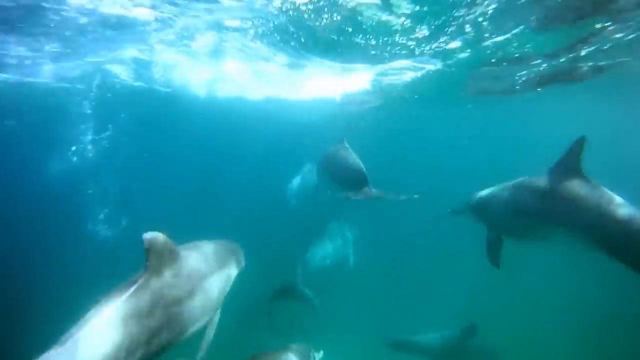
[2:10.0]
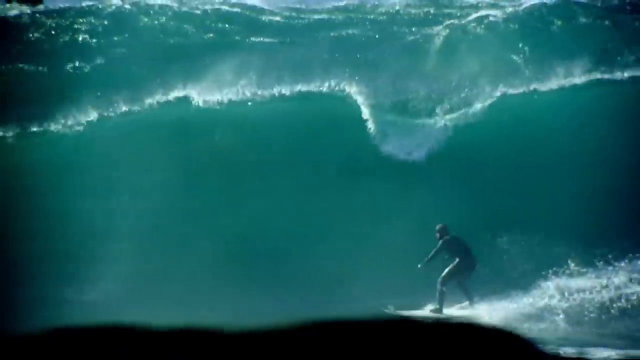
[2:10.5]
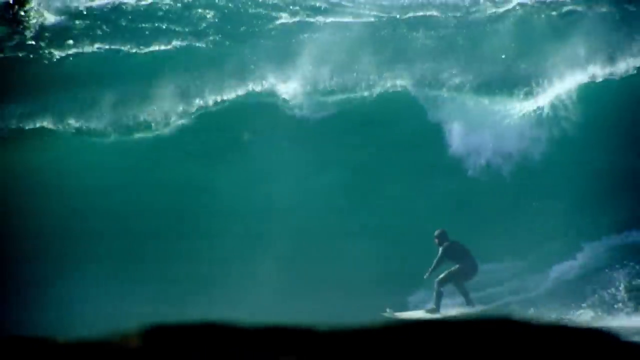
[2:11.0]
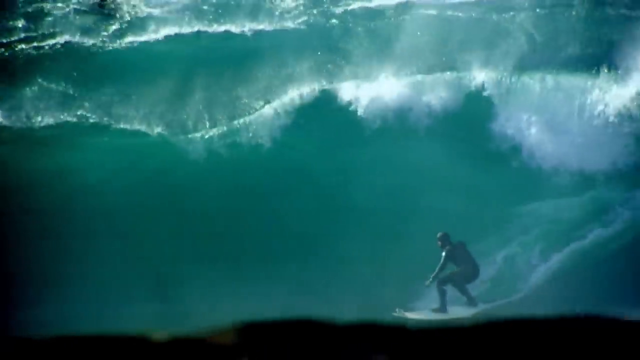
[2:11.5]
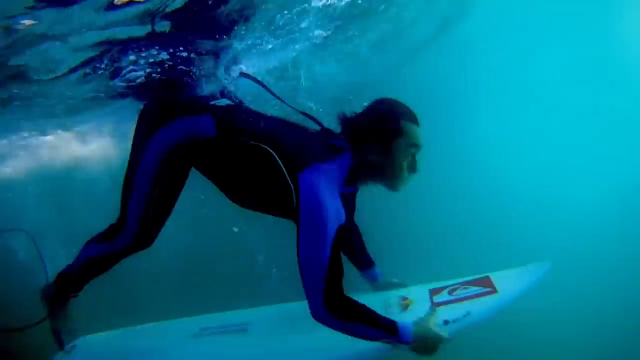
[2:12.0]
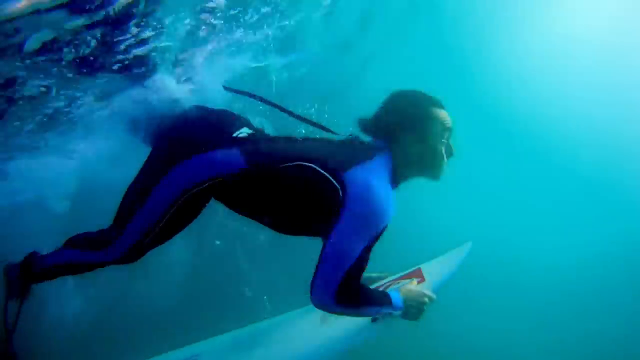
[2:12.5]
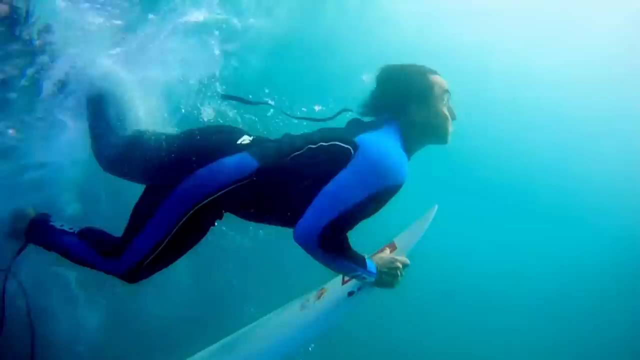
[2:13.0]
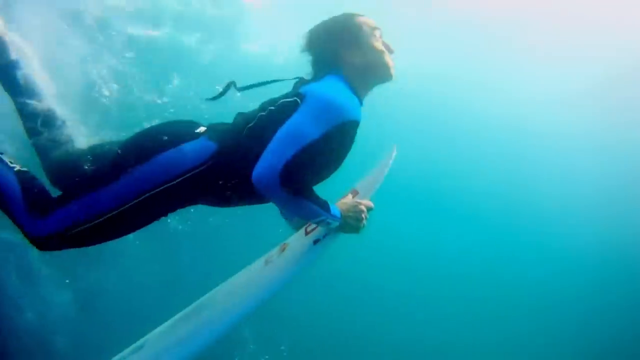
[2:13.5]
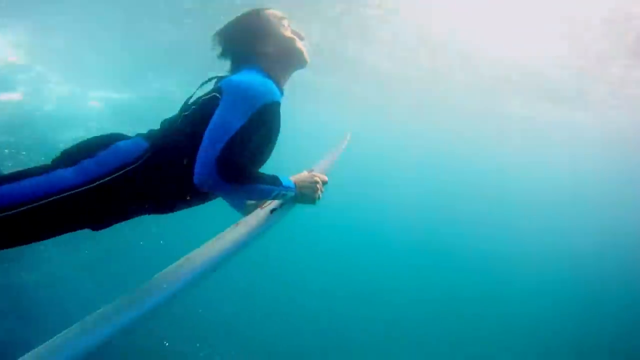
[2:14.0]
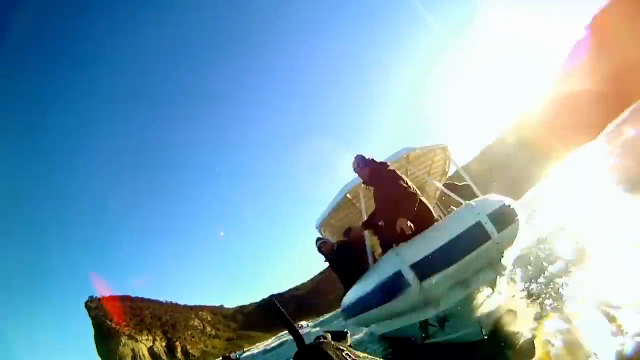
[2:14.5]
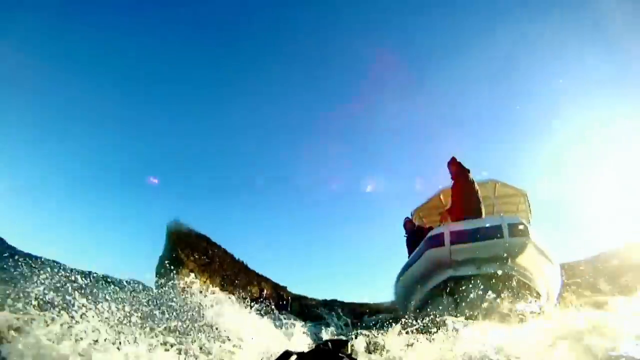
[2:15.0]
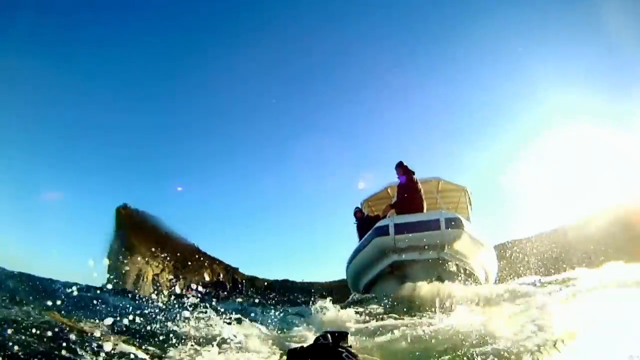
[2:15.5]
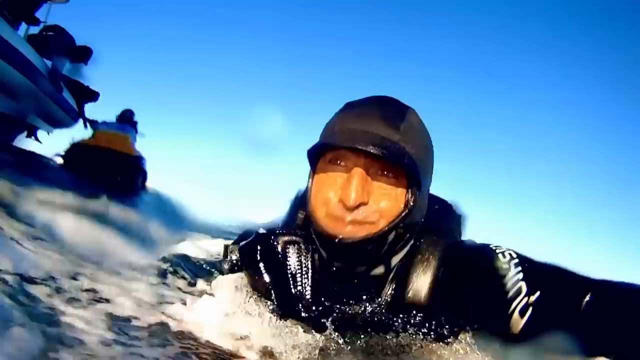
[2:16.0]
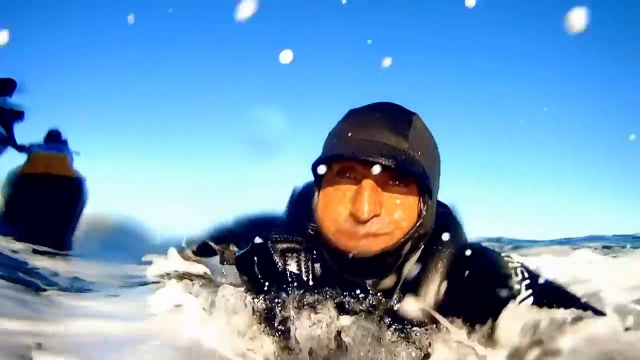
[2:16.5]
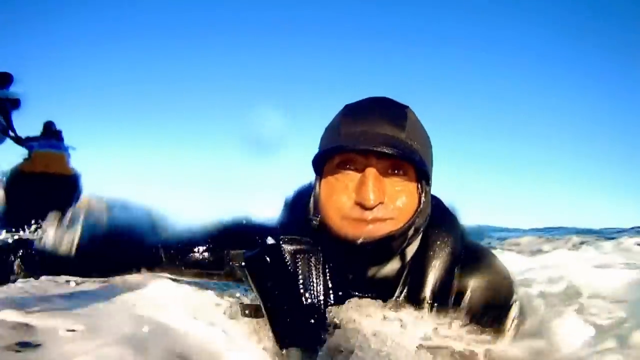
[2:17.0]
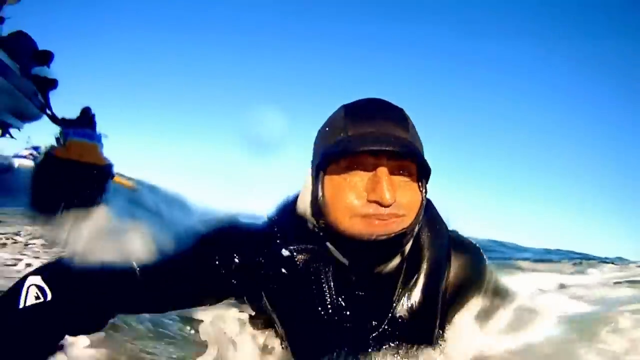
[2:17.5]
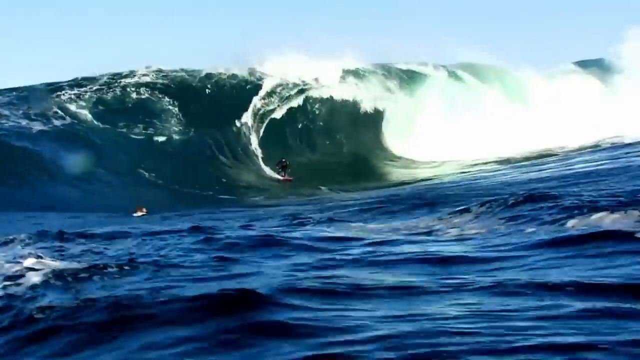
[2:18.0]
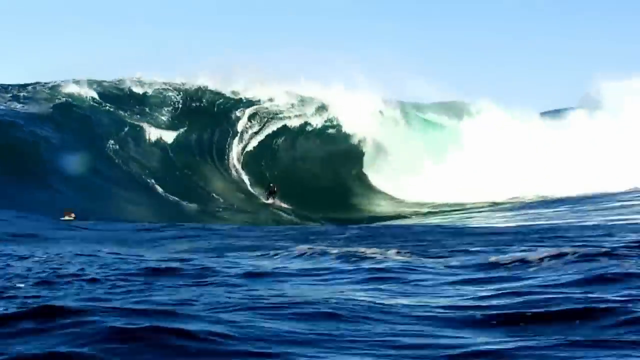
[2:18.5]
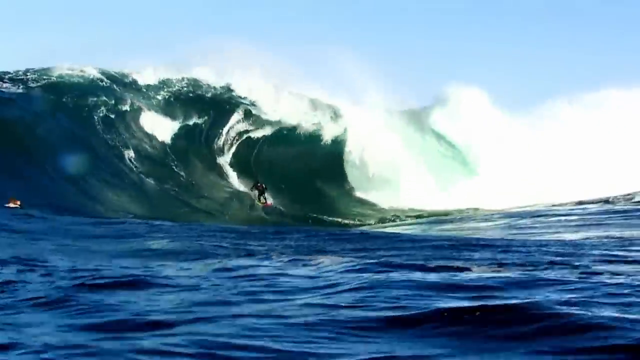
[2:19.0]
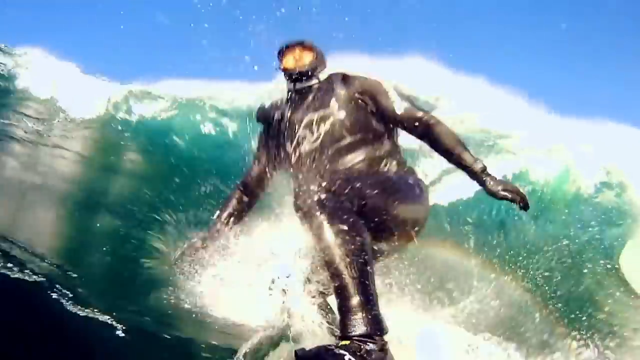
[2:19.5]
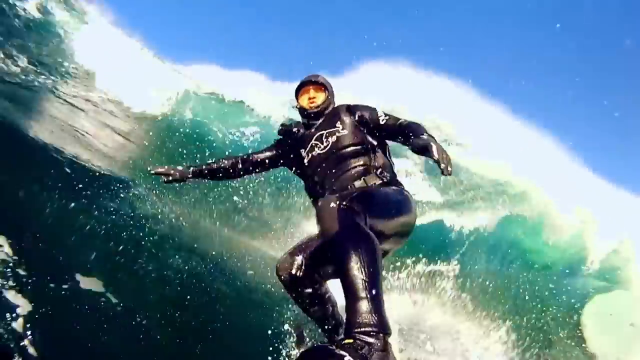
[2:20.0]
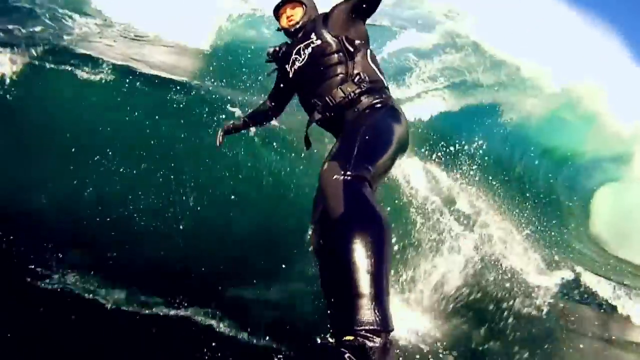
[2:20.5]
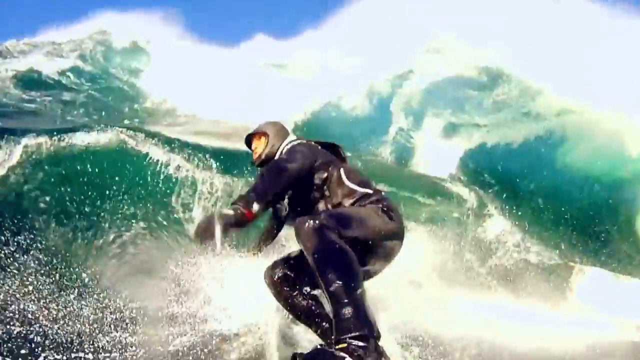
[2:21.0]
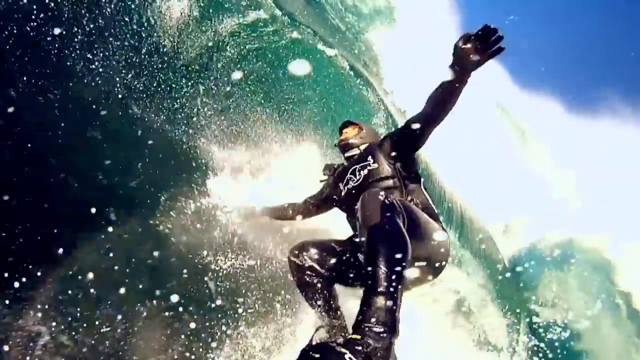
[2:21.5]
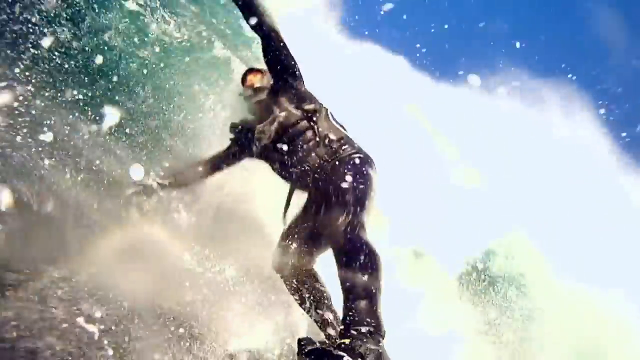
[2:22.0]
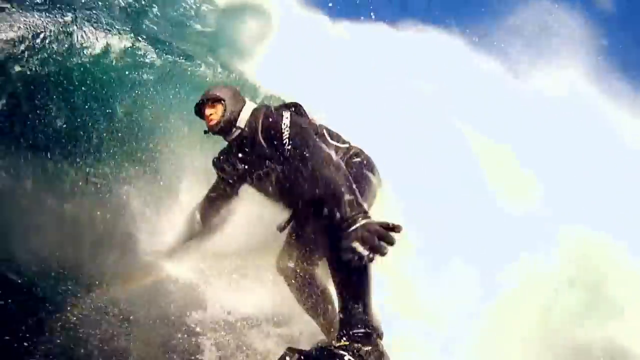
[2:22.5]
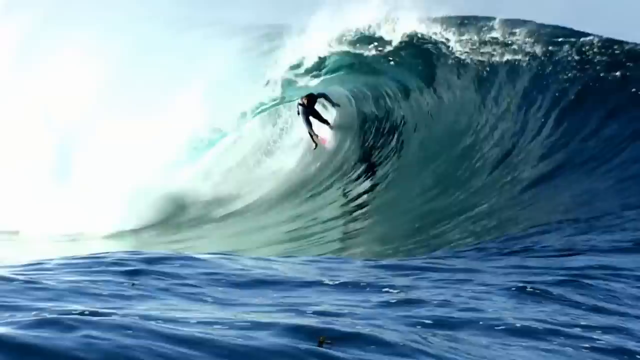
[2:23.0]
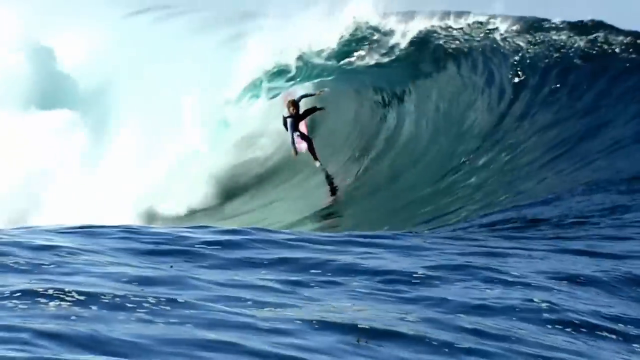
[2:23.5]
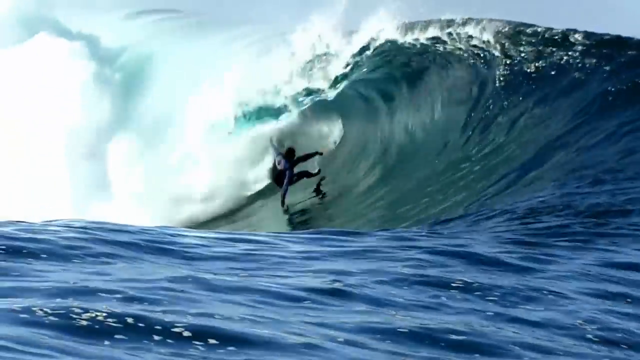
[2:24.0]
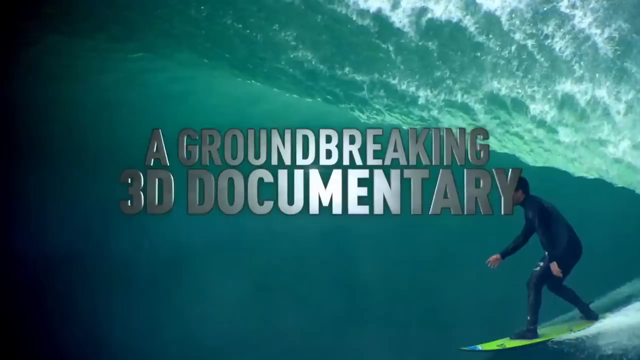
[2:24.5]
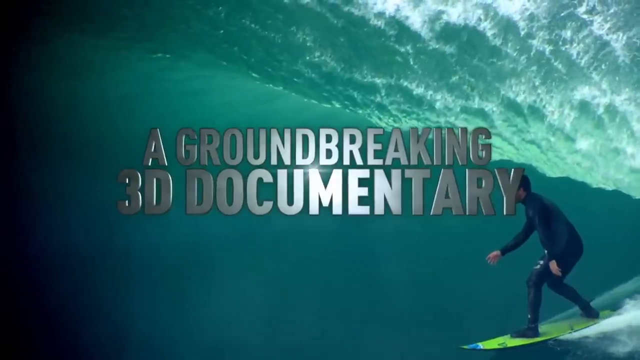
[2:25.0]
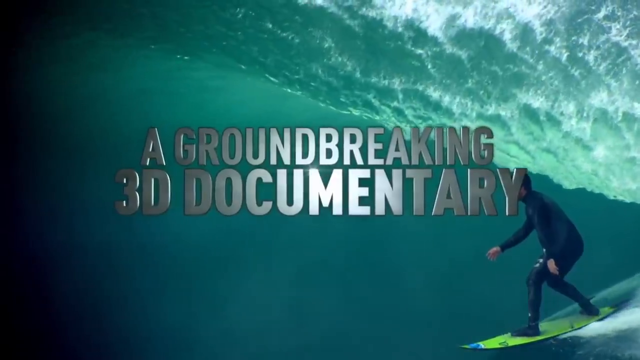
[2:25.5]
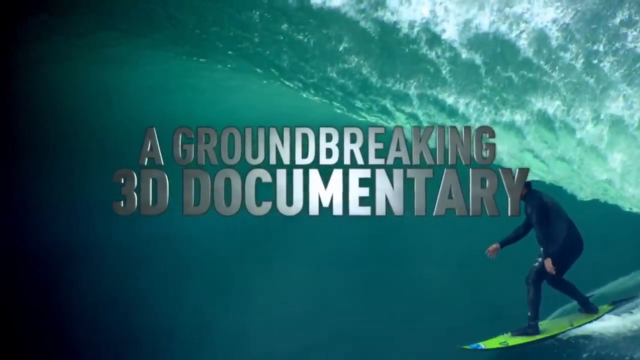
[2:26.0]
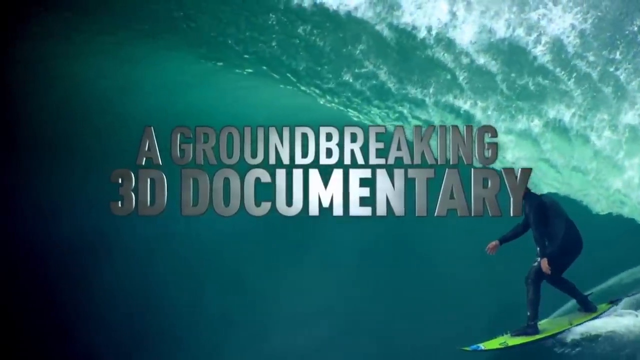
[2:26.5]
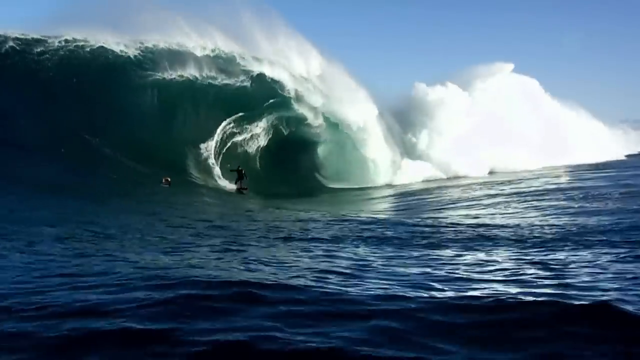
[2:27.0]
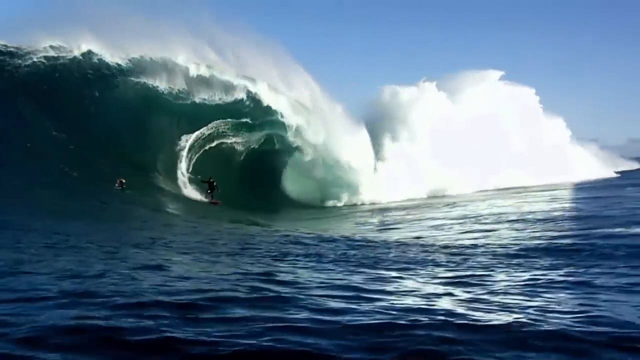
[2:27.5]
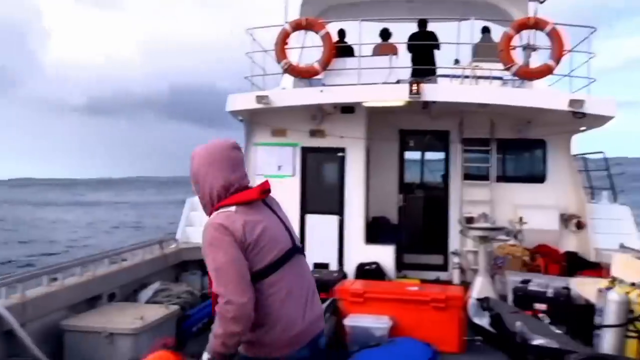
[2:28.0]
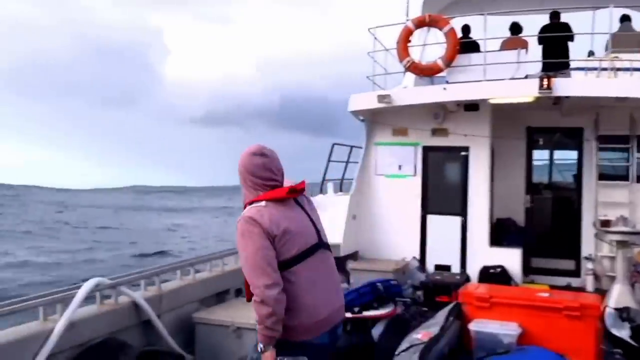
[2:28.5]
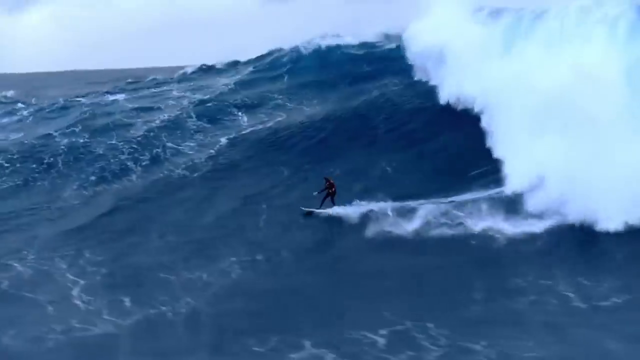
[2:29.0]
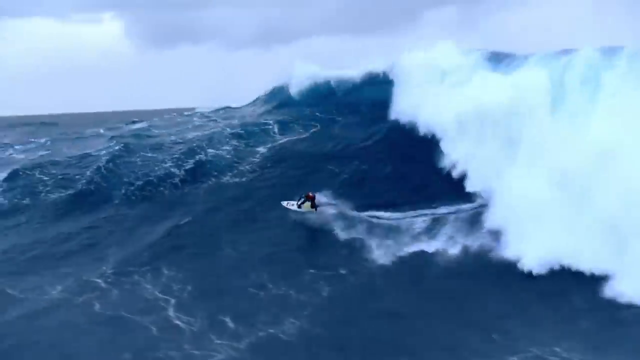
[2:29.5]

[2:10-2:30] Many people surf on the water, and people swim under the water as well. The video quickly transitions through scenes of large waves crashing. A person tries to ride a wave, but the wave is so large and powerful that the surfer trips over and falls into the water. Under the water, a number of sharks swim in different directions.